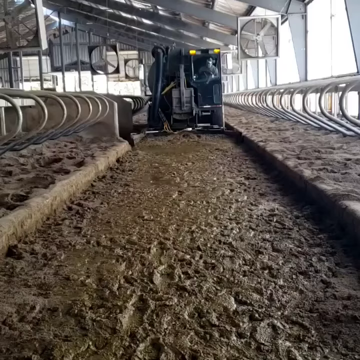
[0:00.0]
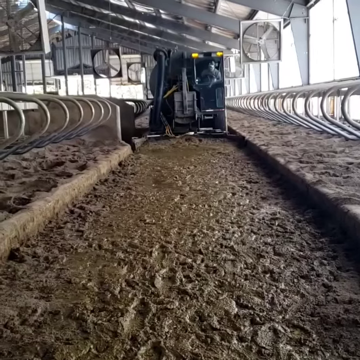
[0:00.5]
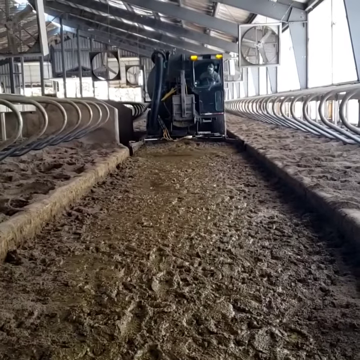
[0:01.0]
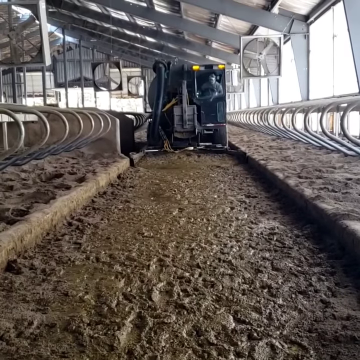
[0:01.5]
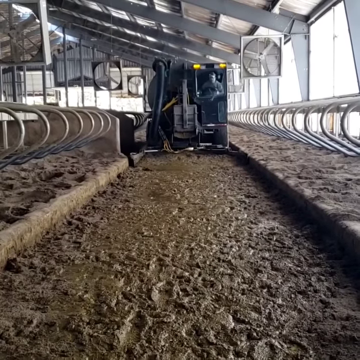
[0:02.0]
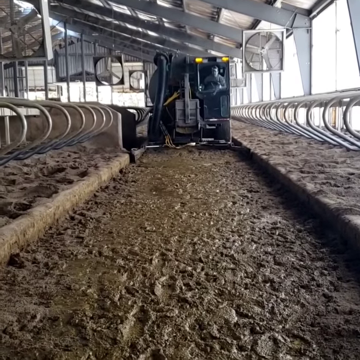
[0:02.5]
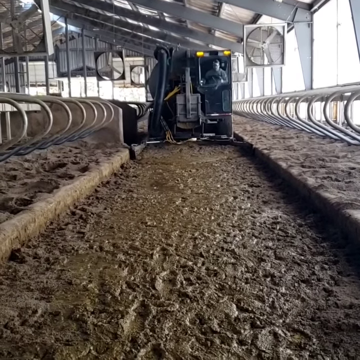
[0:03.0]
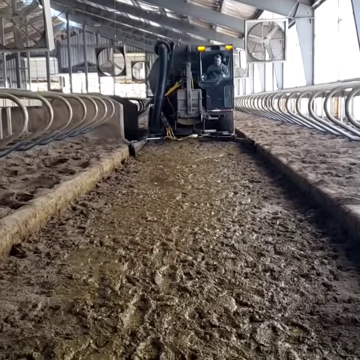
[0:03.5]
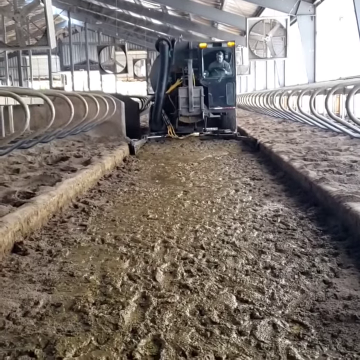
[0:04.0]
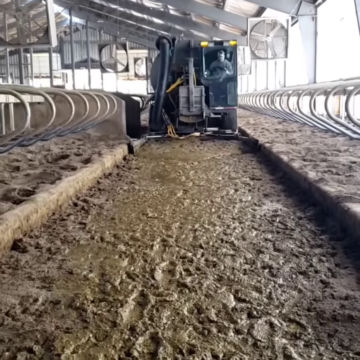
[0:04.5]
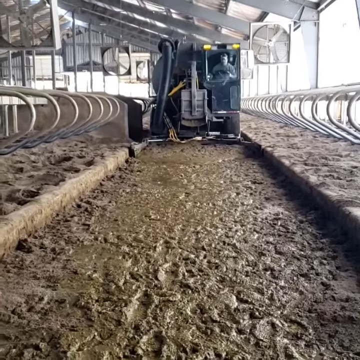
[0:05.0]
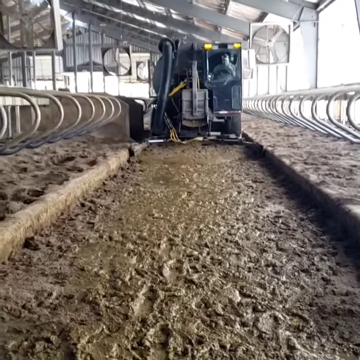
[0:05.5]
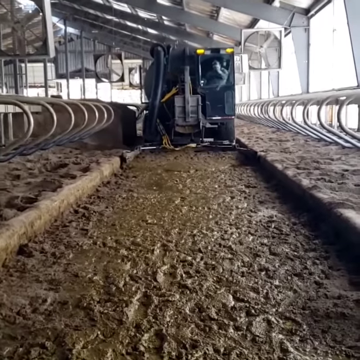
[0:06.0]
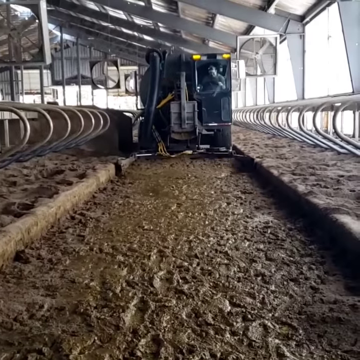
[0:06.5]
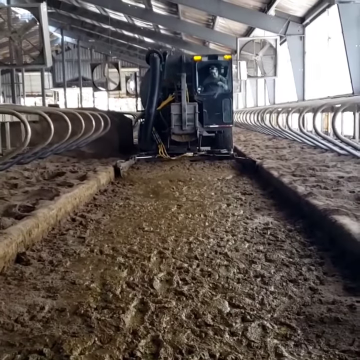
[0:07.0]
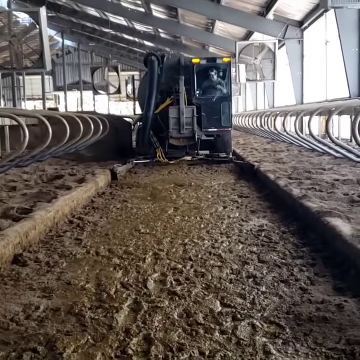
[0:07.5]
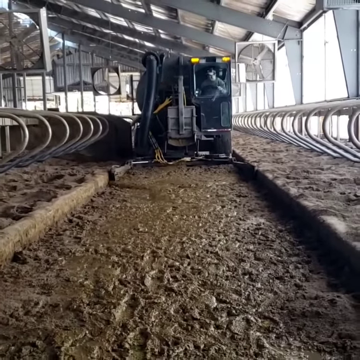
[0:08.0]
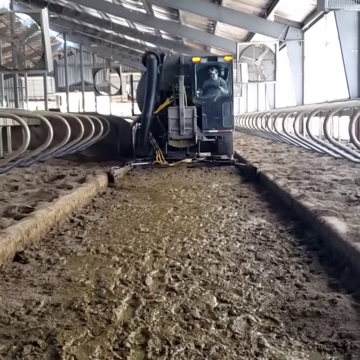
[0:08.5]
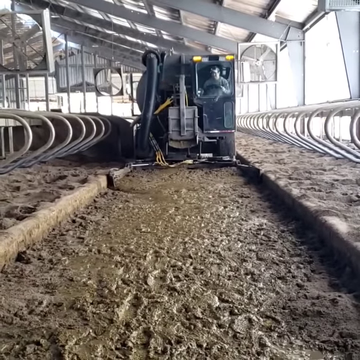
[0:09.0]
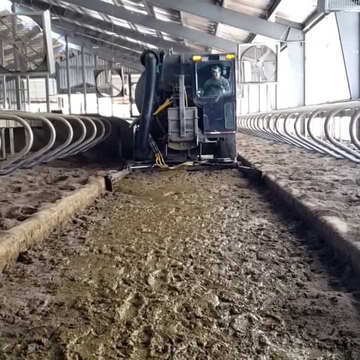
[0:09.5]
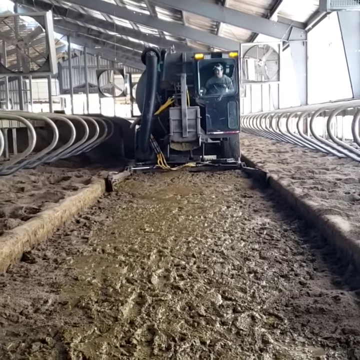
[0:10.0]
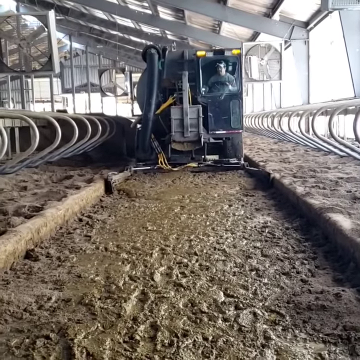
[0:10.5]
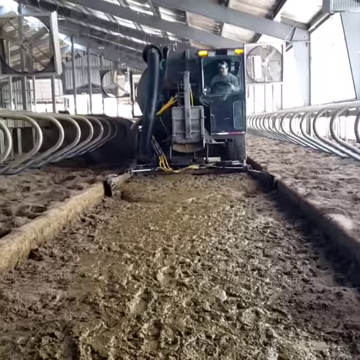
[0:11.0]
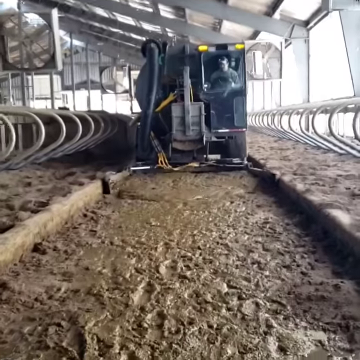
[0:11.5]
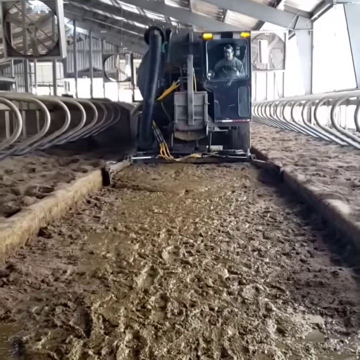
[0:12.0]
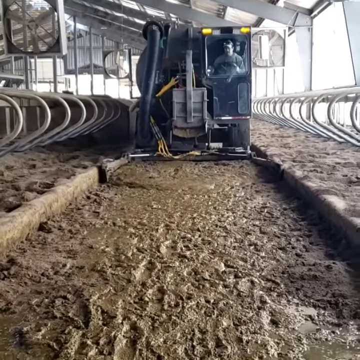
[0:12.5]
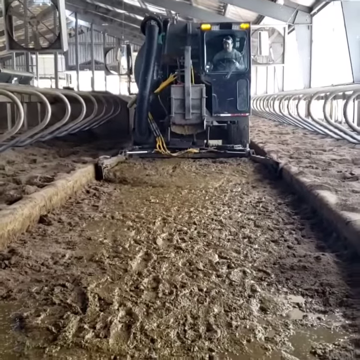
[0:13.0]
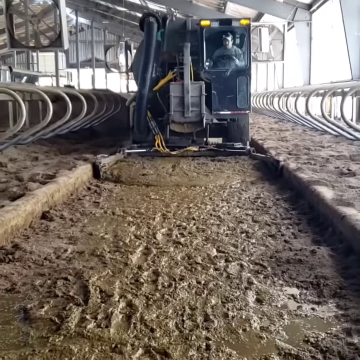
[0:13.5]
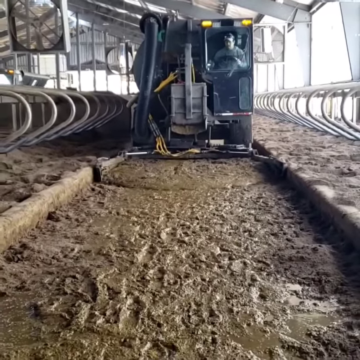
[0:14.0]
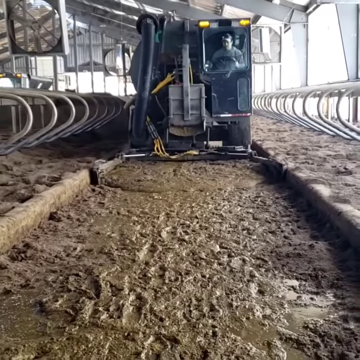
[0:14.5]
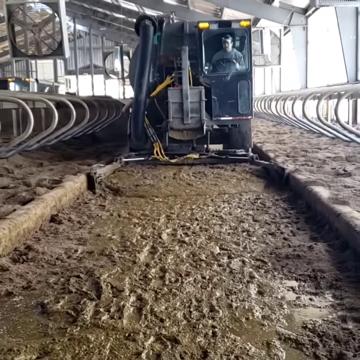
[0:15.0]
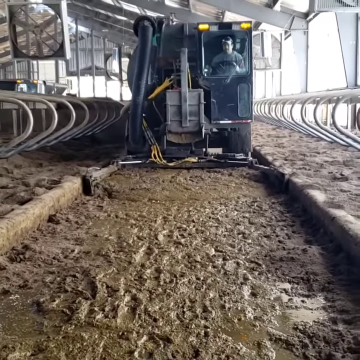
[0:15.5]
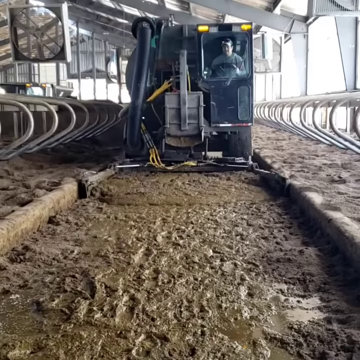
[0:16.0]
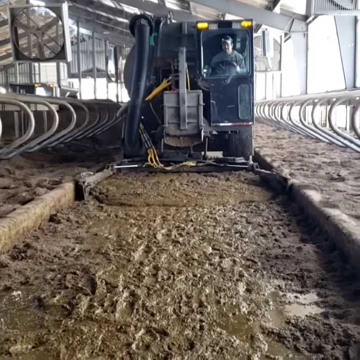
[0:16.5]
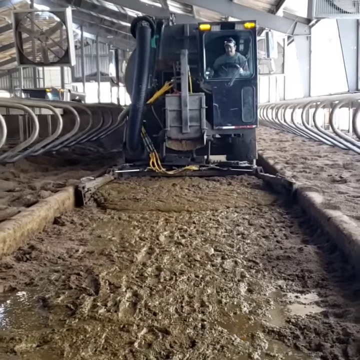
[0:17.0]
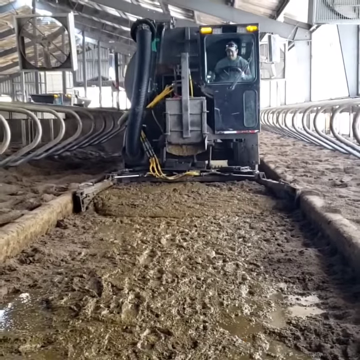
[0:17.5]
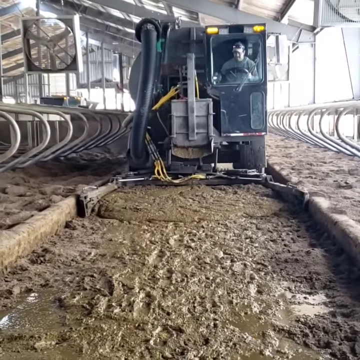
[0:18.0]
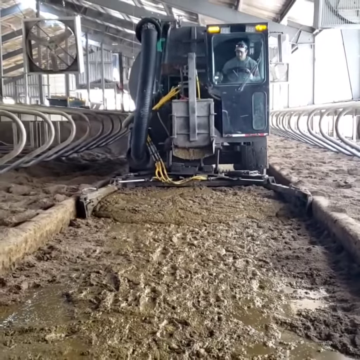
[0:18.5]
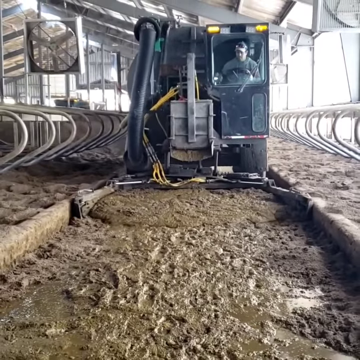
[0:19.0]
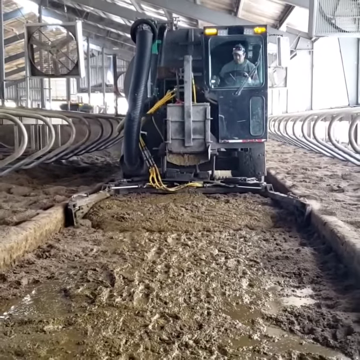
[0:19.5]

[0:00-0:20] A very muddy building appears, a metal structure with stalls to each side; it looks as if it could be a cattle barn. Fans hang from the ceiling, and in the center of the screen there is kind of a pathway cut down into the muck, with an angle that kind of looks like a curb. A big machine takes up the entirety of that pathway, with a man inside in the upper right of the machine operating it. The machine drives forward toward the camera, pushing all the mud and muck forward and leaving the foundation of the pathway intact and less wet. The building seems to let in a lot of natural light, but its main structures are metal. It has a high, pitched roof, and the point at the very top seems very high before coming down on each side.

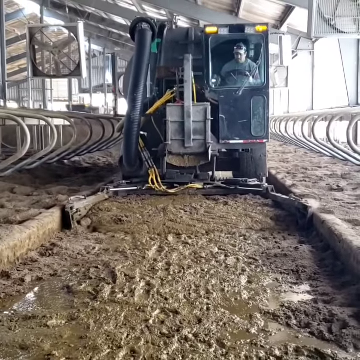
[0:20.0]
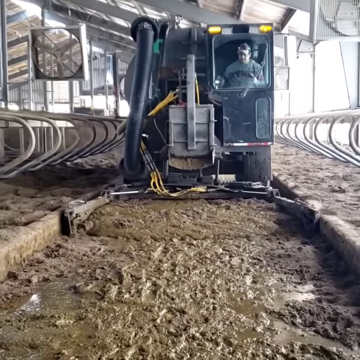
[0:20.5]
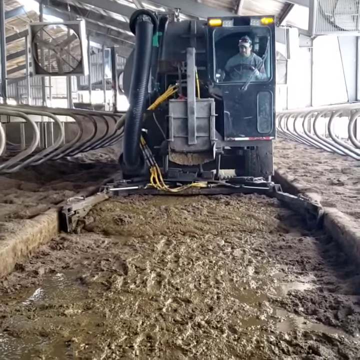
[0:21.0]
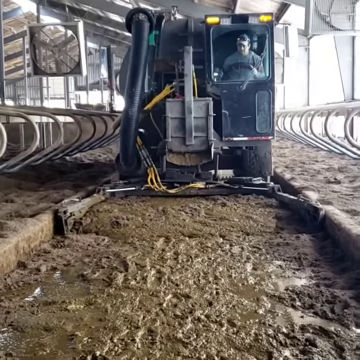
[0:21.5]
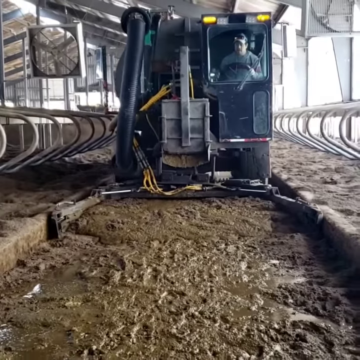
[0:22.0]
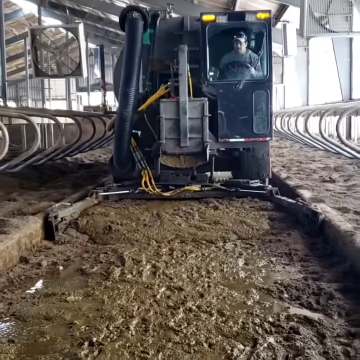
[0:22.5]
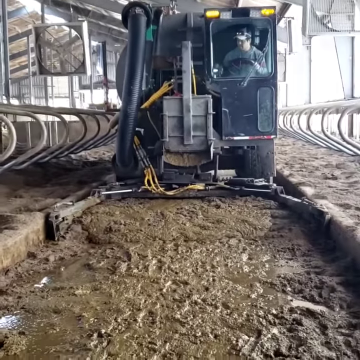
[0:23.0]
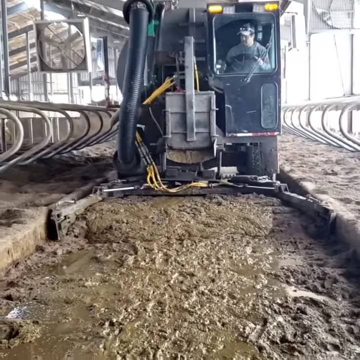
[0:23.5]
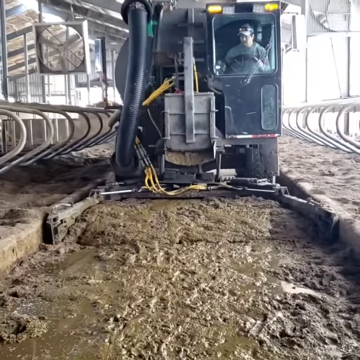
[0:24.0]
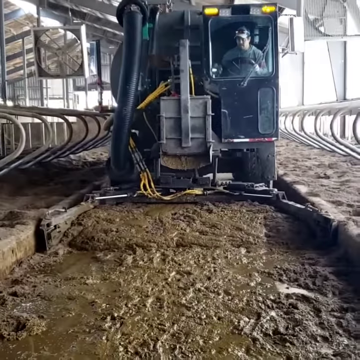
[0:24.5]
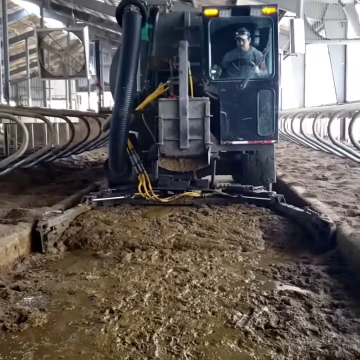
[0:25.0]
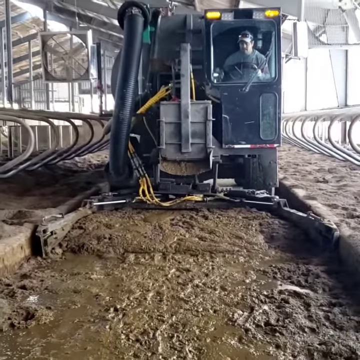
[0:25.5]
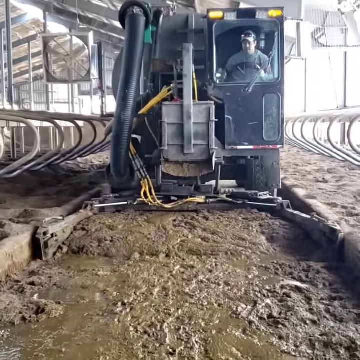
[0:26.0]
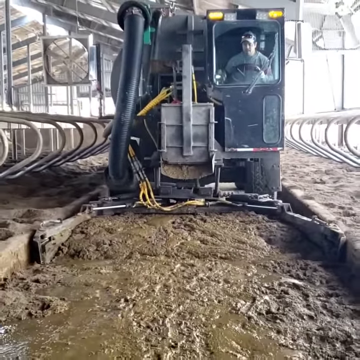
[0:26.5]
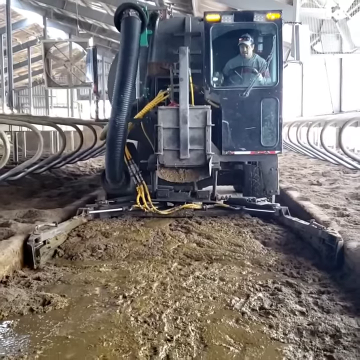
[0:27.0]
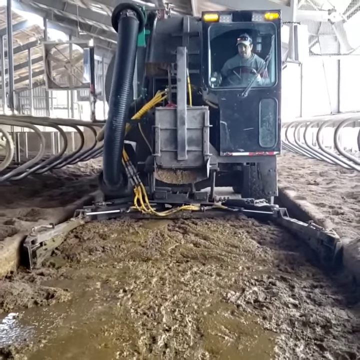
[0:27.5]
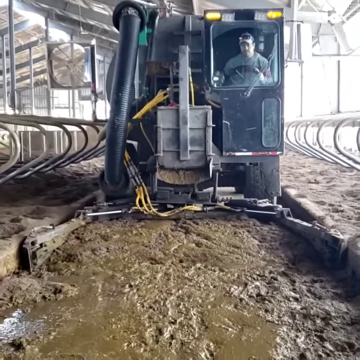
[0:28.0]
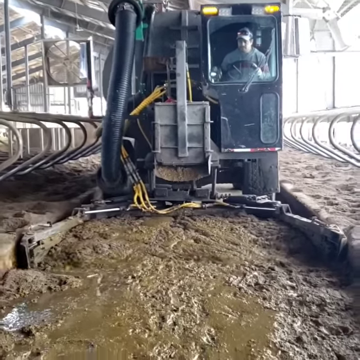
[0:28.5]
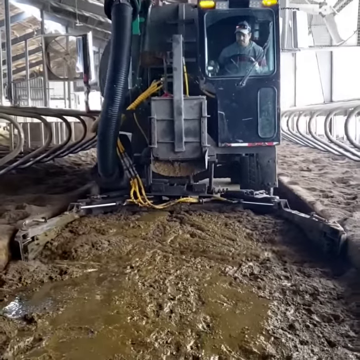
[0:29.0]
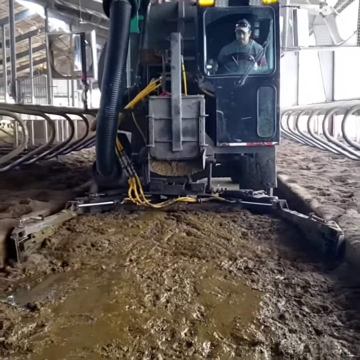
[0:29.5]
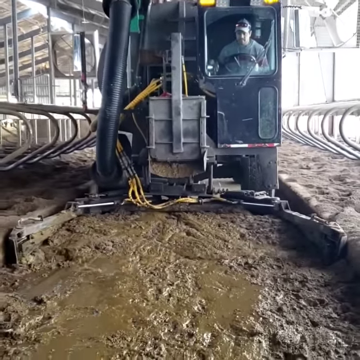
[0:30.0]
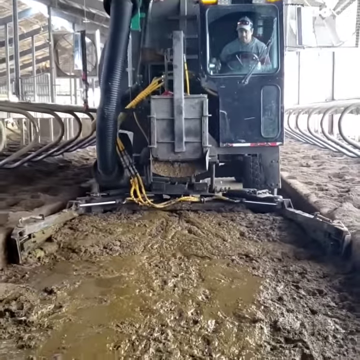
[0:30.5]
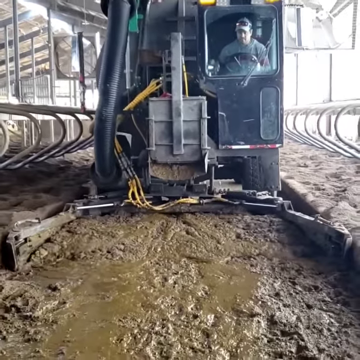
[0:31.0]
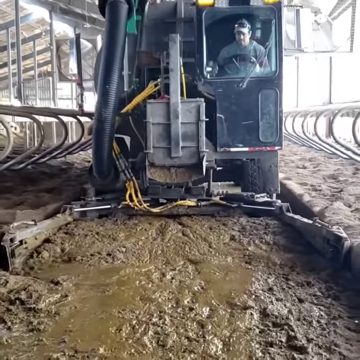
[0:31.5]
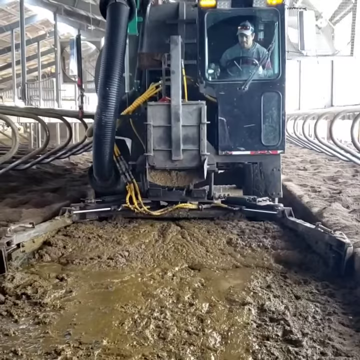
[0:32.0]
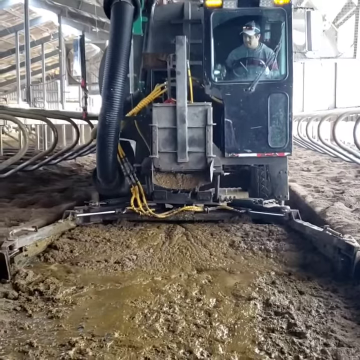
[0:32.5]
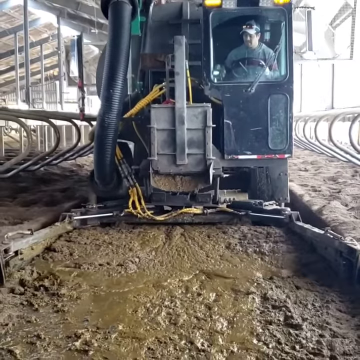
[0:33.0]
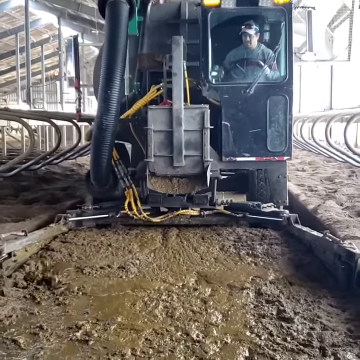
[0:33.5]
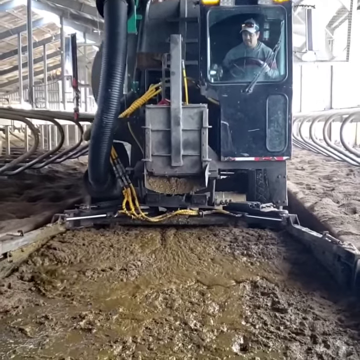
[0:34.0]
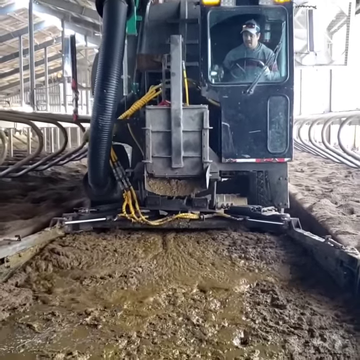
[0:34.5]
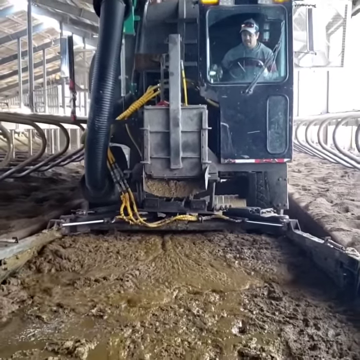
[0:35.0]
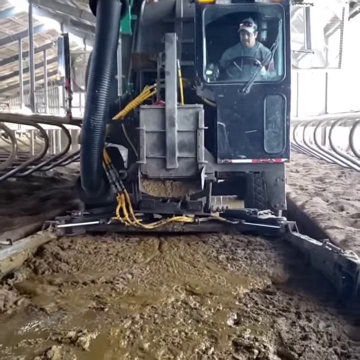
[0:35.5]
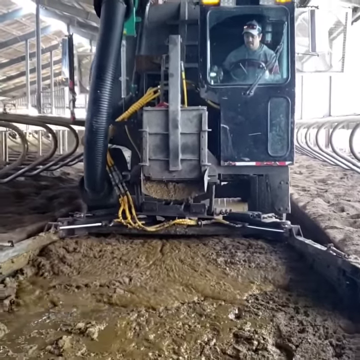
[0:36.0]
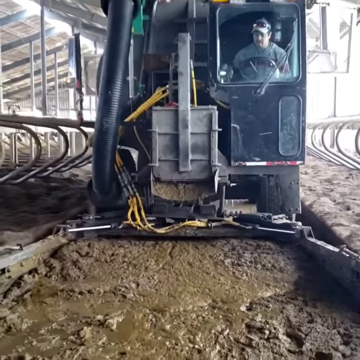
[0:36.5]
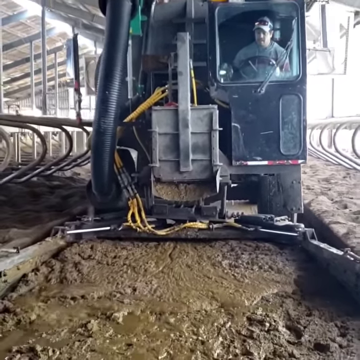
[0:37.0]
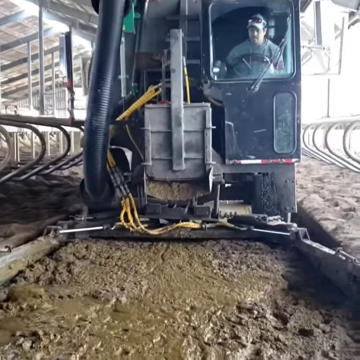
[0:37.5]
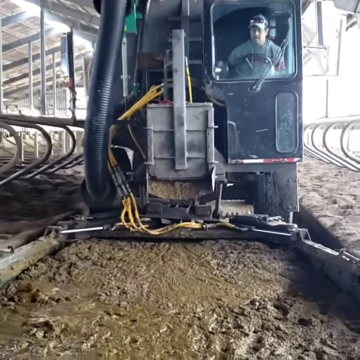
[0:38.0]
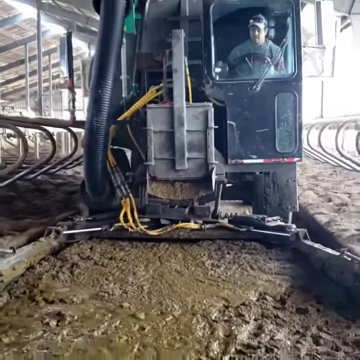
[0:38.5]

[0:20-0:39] A large machine comes toward the camera, seemingly clearing and cleaning up a pathway by removing the liquid mess to make a more solid path. The machine is rectangular, with a windshield and a windshield wiper in its upper right corner. Inside that windshield, a man in a gray sweatshirt and a baseball cap drives the machine with a steering wheel. The machine seems to be collecting and pushing forward a wet, muddy mess. It keeps coming toward the camera as the camera slowly backs up. There is a big tube on the left-hand side, and yellow wires are visible. The man seems to be moving the machine very carefully, watching forward and then looking down at the collection area and the edges in front of the machine.